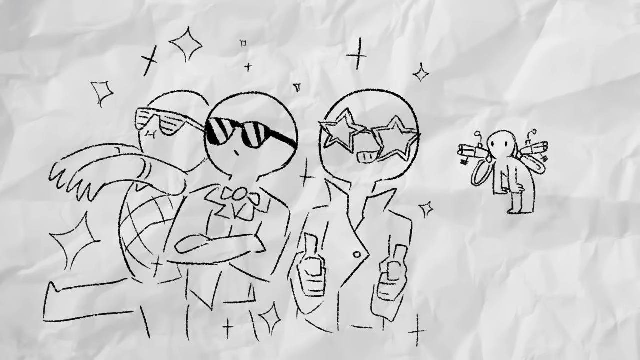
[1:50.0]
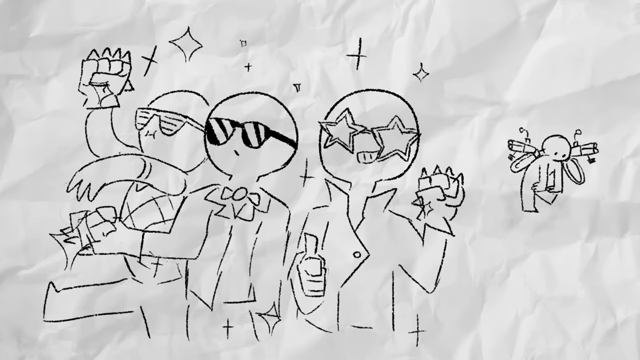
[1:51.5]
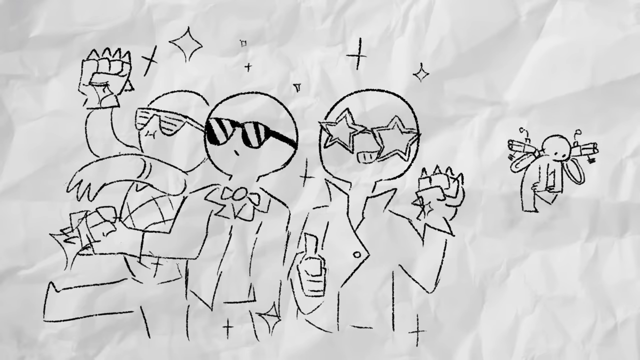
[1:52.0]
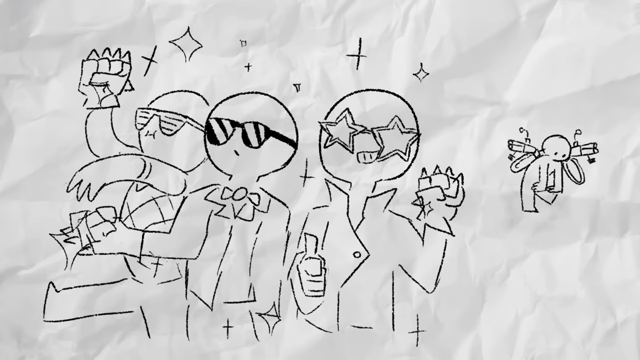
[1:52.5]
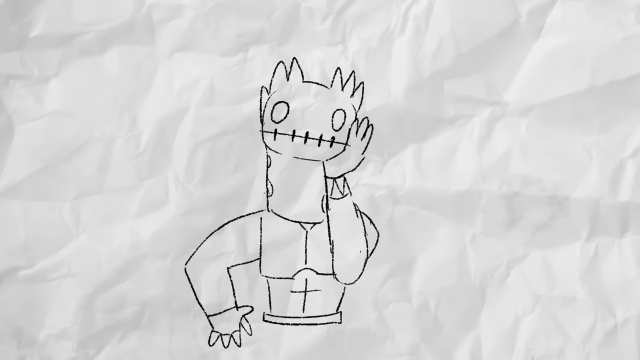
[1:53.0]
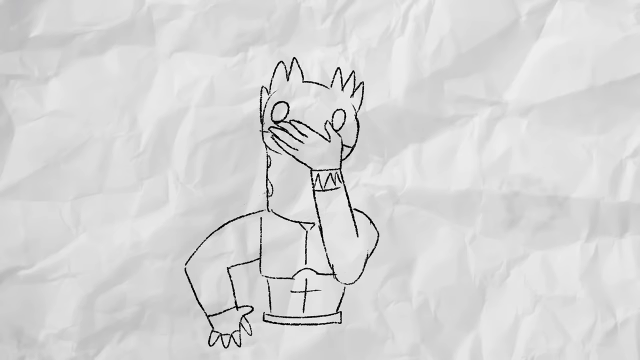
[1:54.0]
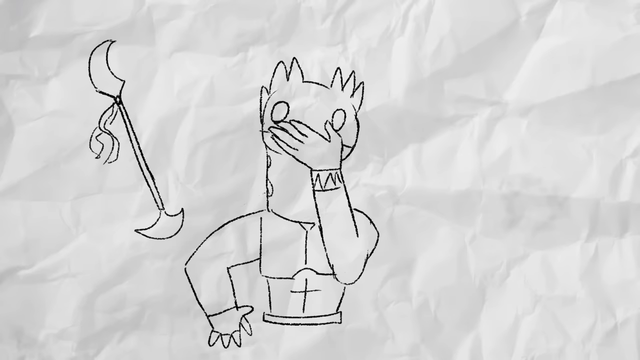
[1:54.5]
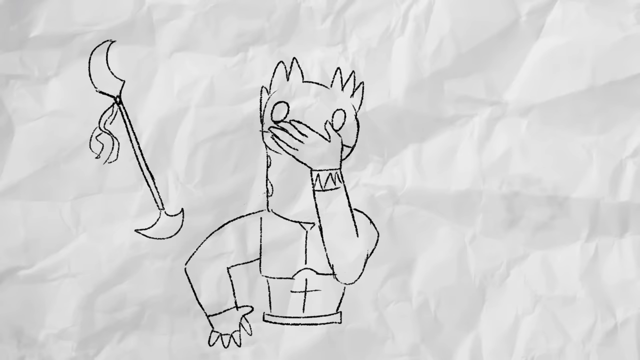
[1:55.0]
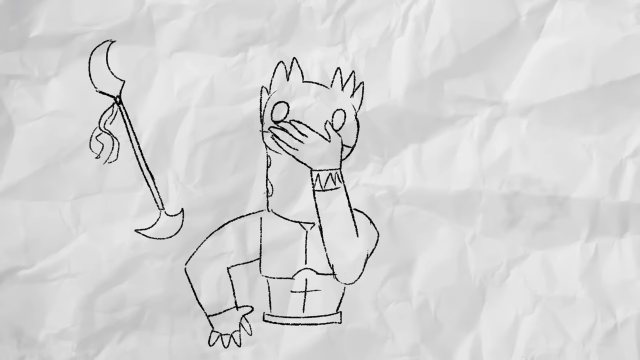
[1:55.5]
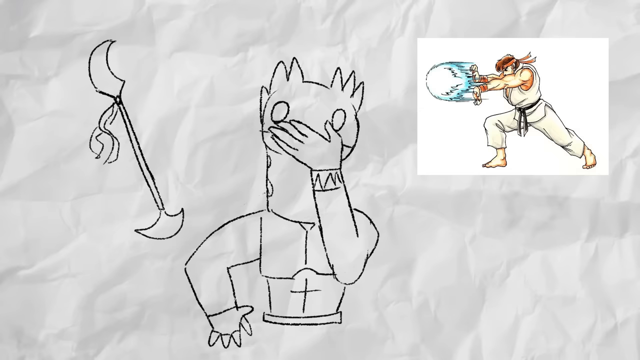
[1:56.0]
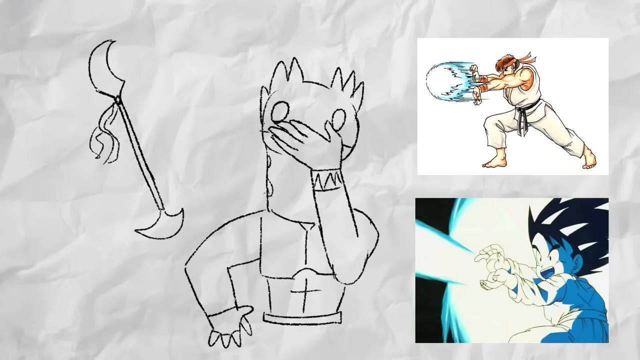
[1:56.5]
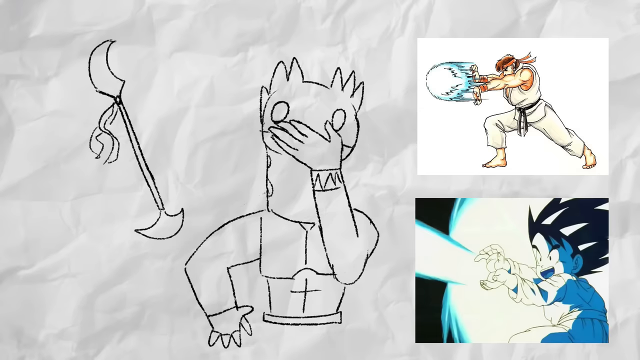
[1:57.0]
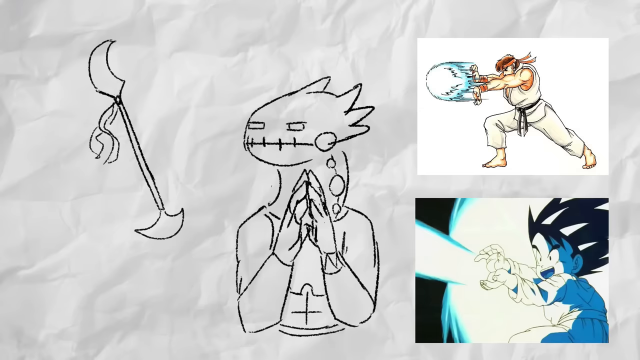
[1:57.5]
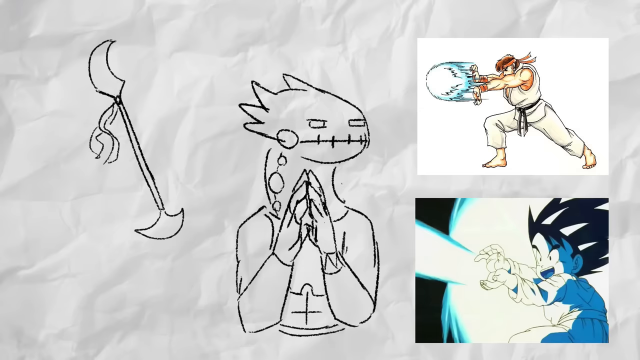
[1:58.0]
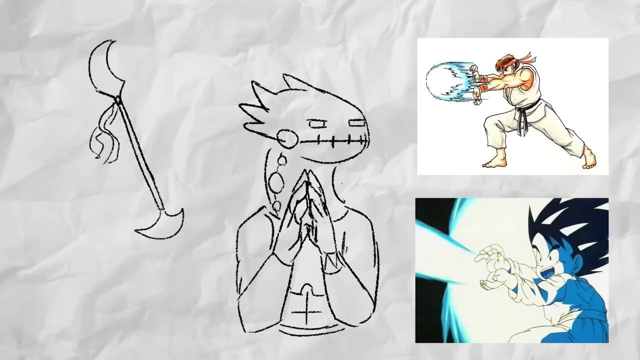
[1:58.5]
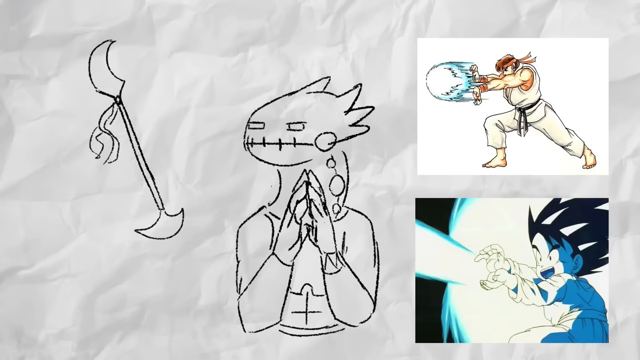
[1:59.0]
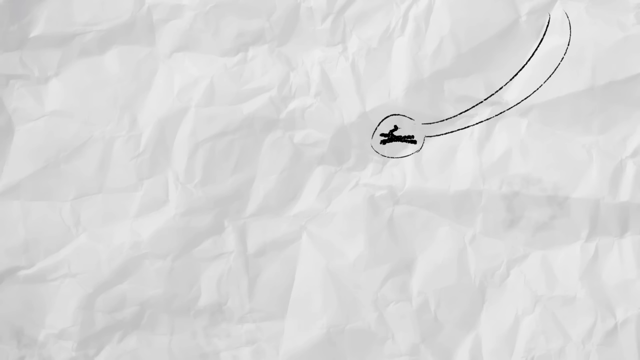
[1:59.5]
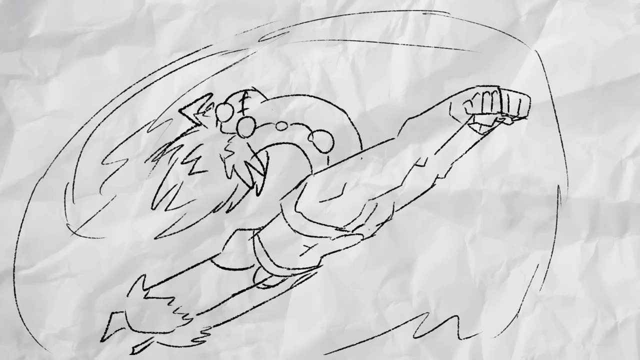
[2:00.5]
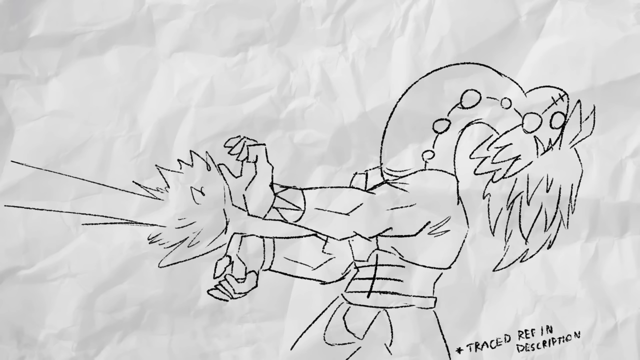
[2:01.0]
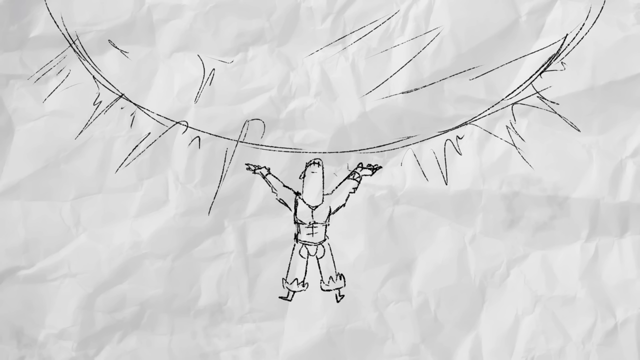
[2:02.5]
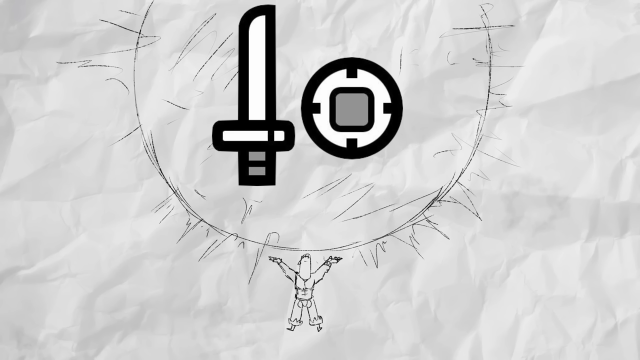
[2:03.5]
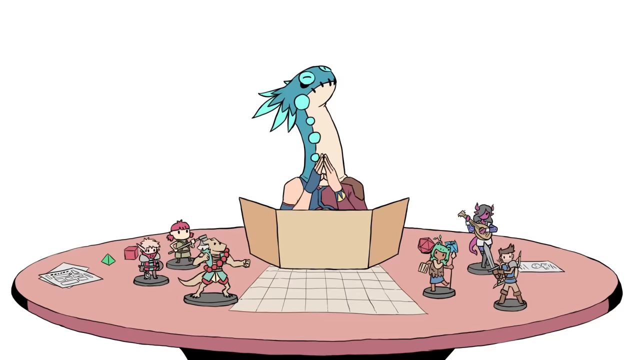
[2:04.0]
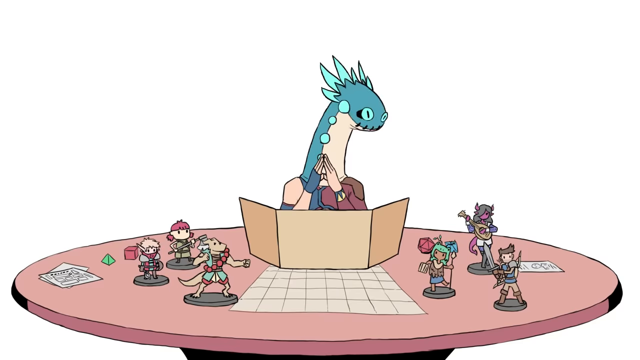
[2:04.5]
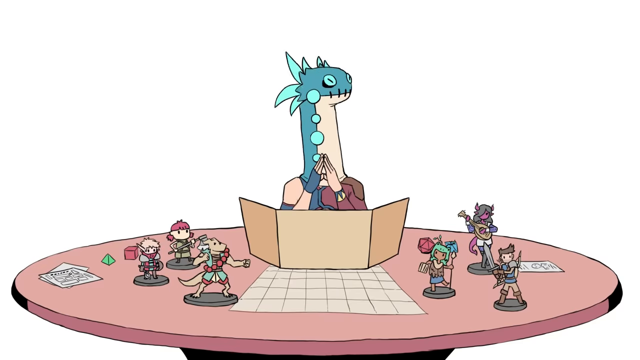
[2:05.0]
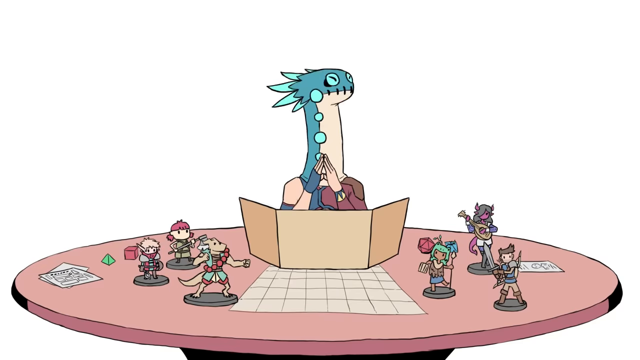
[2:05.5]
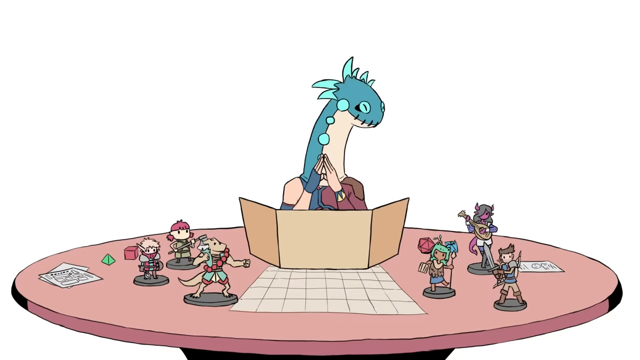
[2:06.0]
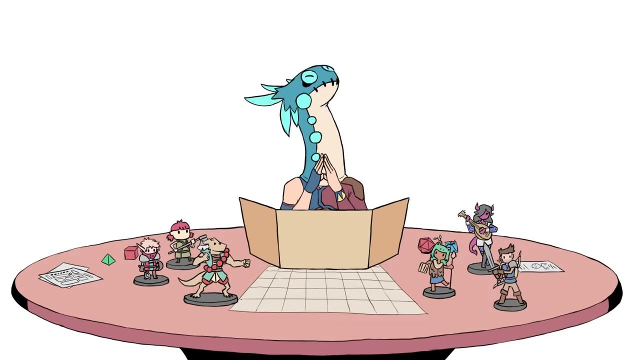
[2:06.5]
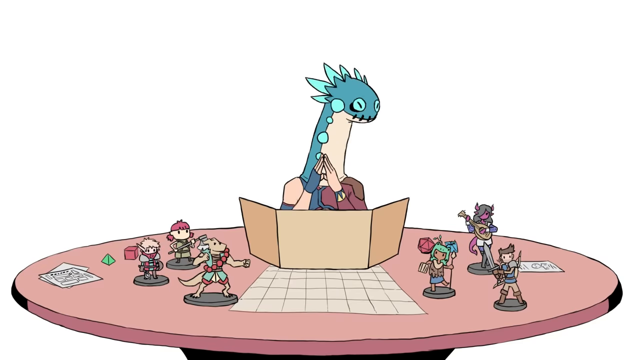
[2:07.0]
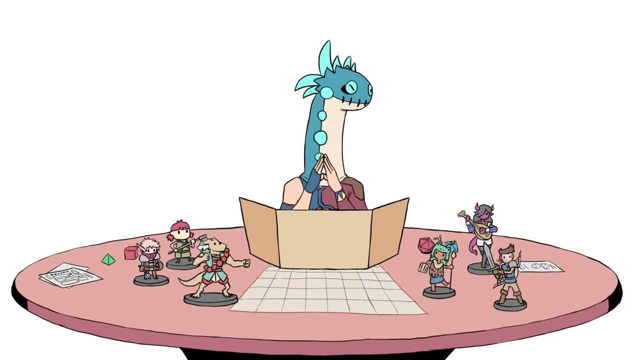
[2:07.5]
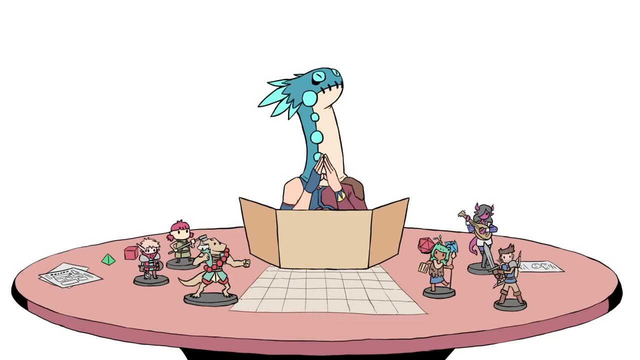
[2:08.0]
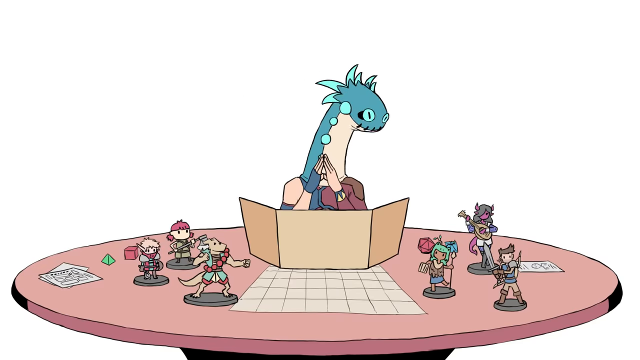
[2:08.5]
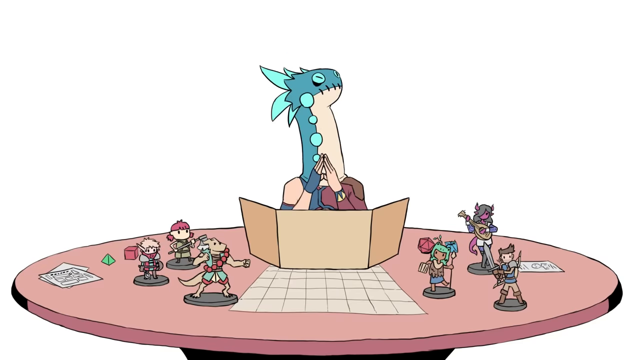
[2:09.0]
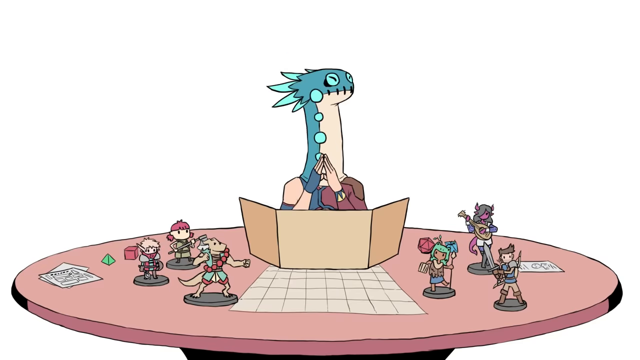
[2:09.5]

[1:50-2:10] On a crumpled-paper background, three people on the left side look like they are going to a New Year's party or some sort of party, all dressed up in sunglasses and trying to look cool. There are little stick-figure drawings in the bottom right in the background, and another one looks on as if he wants to go with them. The video cuts to the lizard man with one hand on the side of his head and the other on his hip, and his mouth is covered. There is a little battle axe to the left, and Ryu and another character from the video game are below him on the right side. He looks over to the left, then right, then left. He is then shown shooting a fireball as his head falls over. Then he holds up a big ball, and the video cuts back to the table from before, where he sits in the center, his head kind of bobbling back and forth. Three Dungeons and Dragons characters are on the left side and three on the right side.